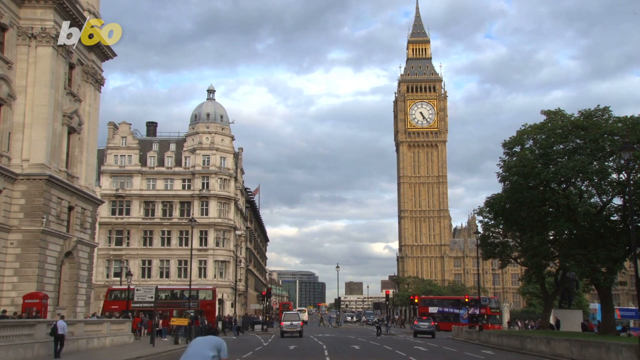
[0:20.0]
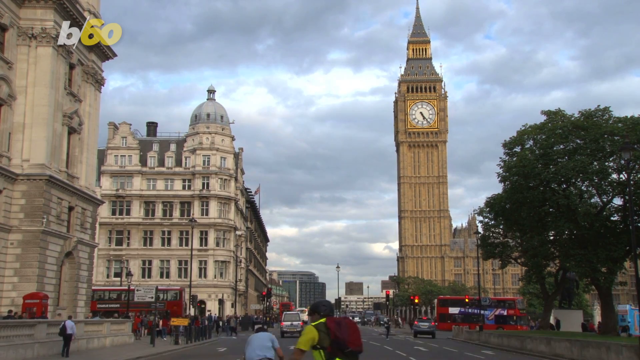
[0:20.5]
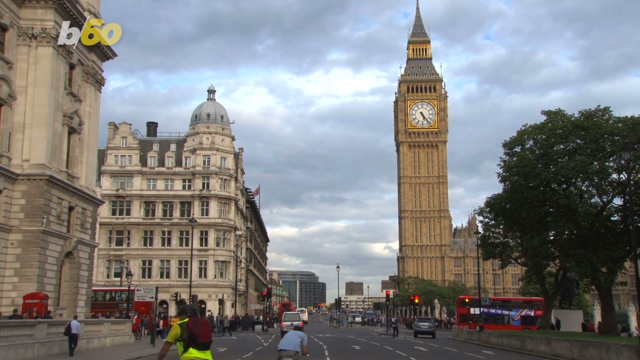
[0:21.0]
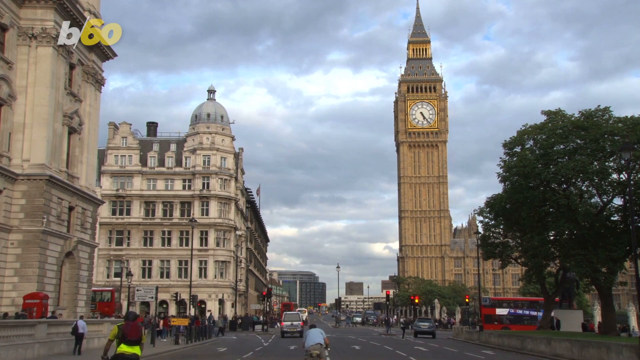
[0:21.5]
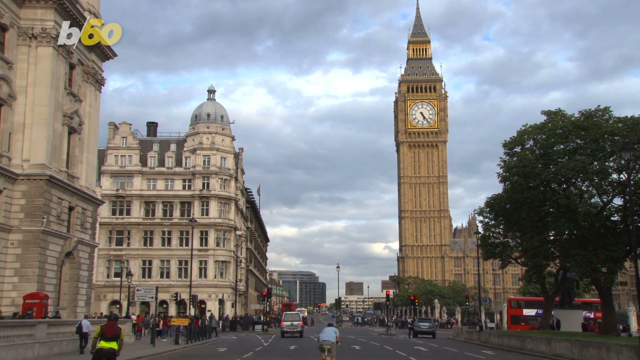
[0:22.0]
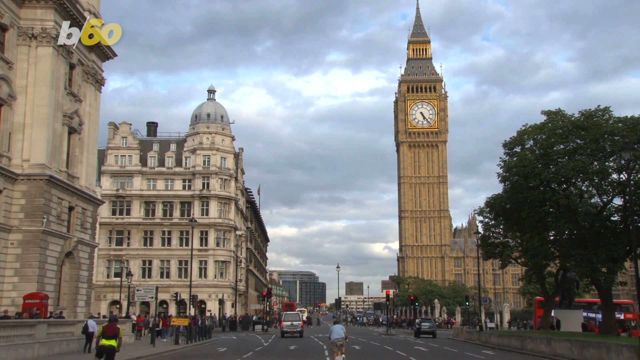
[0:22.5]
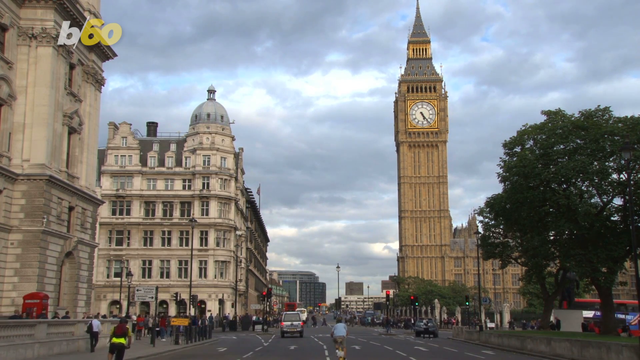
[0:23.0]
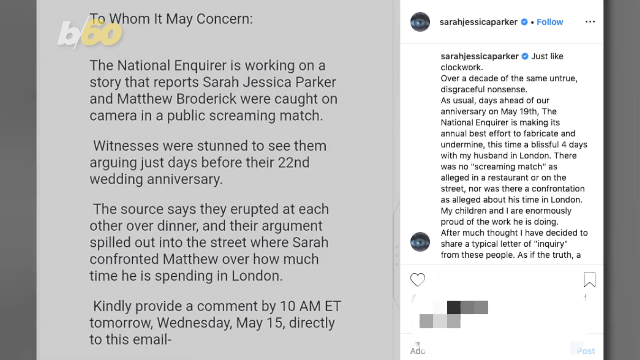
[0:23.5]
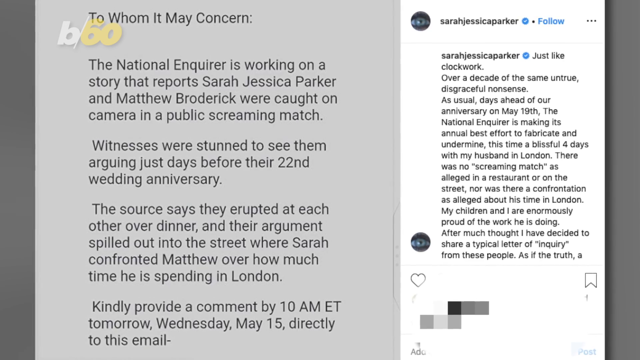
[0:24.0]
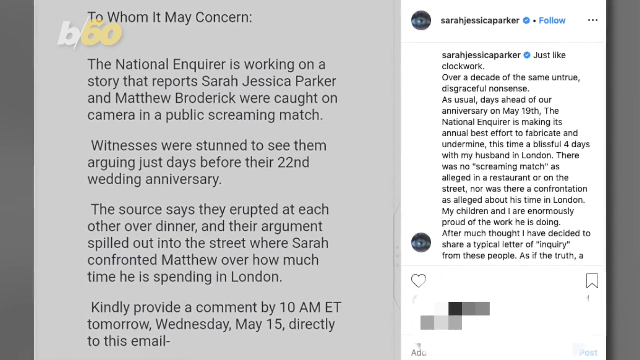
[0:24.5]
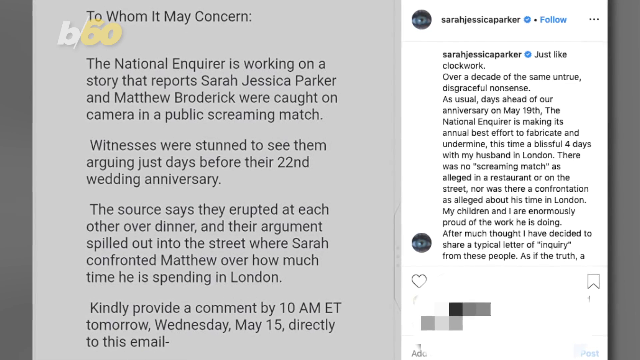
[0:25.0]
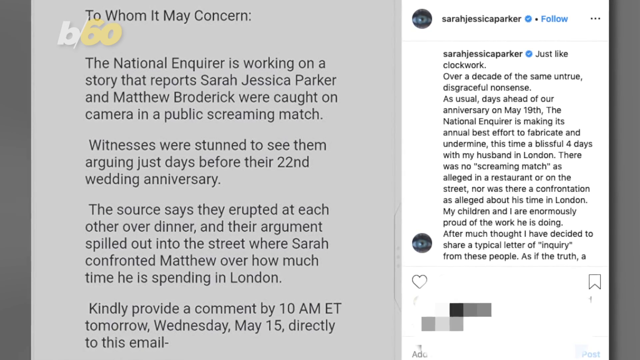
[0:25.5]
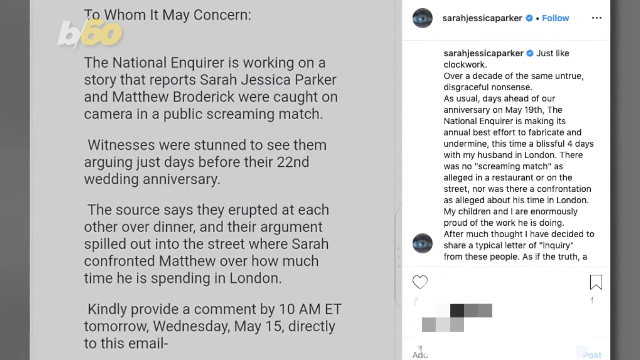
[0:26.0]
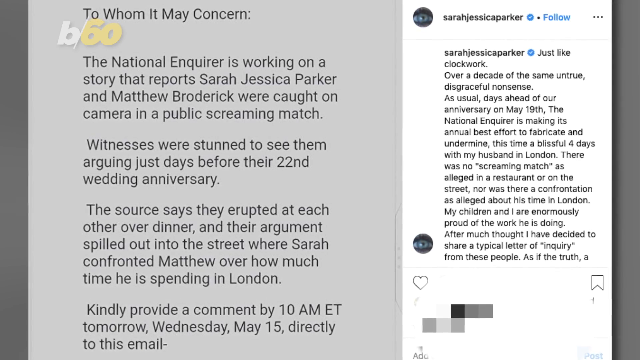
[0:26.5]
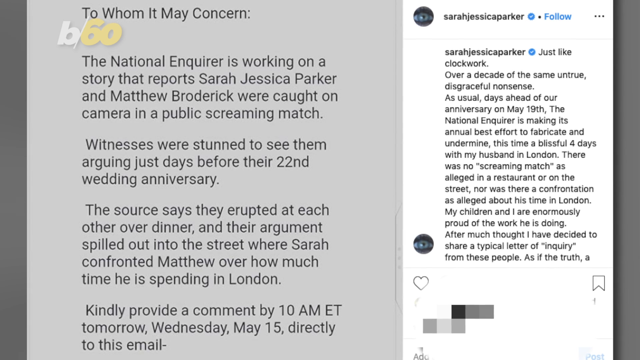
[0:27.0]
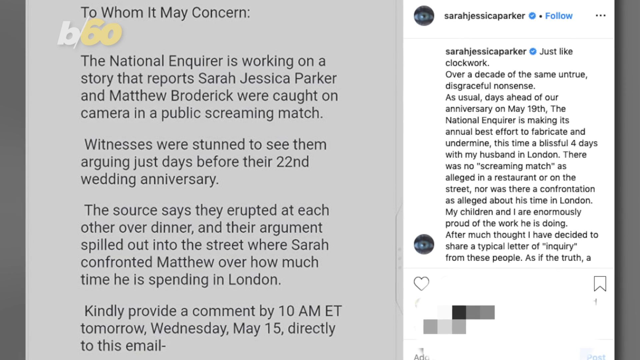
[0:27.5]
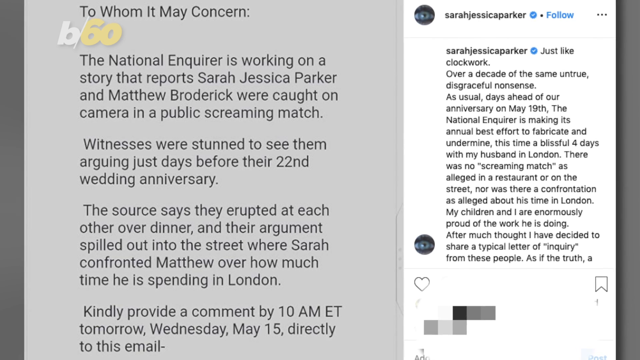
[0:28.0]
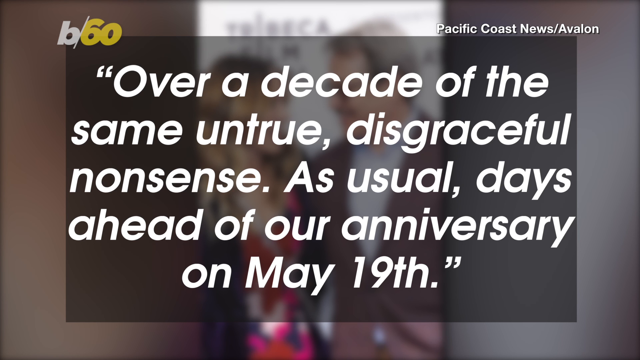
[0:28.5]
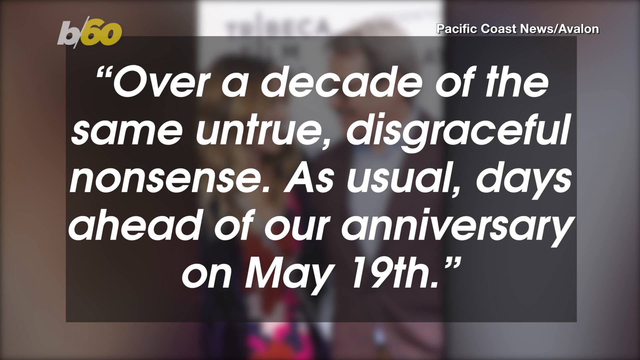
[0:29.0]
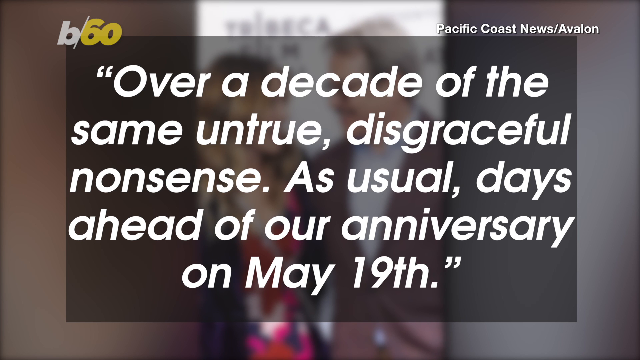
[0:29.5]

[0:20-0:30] The video shows the streets of a city, possibly London, with a small clock tower on the right side and some buildings on the left. The sky is very cloudy, and the clouds are somewhat dark, especially towards the background. The camera is pointed down a city street. On the far right of the image is a lone tree. A bus appears to be driving along towards the right side of the image, past the tree but in front of the clock tower. All along the street, people are moving around, visible just at the bottom of the frame. After a moment on this city scene, the video reverts to the image of the text from before and slowly zooms in on it. The text is in black font on a gray background on the left side, and the right side has a white background. It then transitions to another image of the two people, blurred out with text over it.